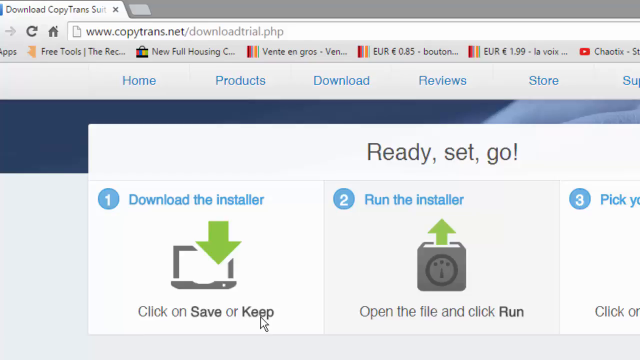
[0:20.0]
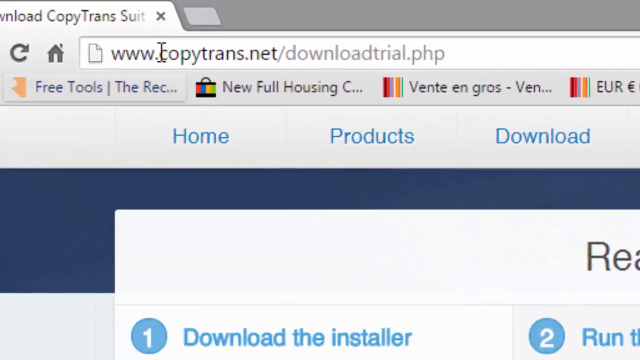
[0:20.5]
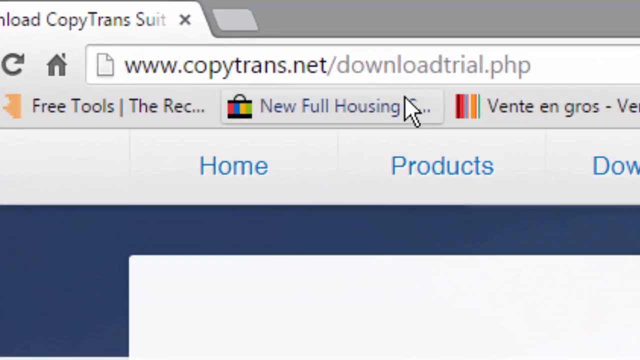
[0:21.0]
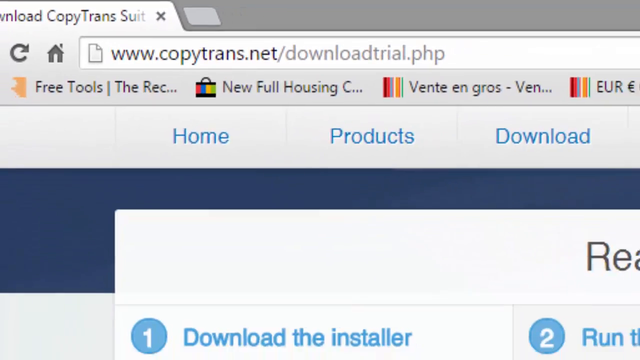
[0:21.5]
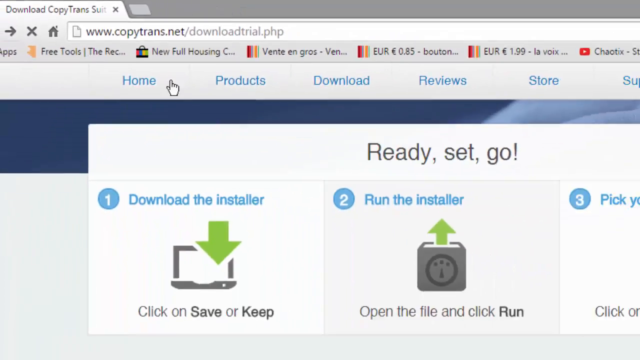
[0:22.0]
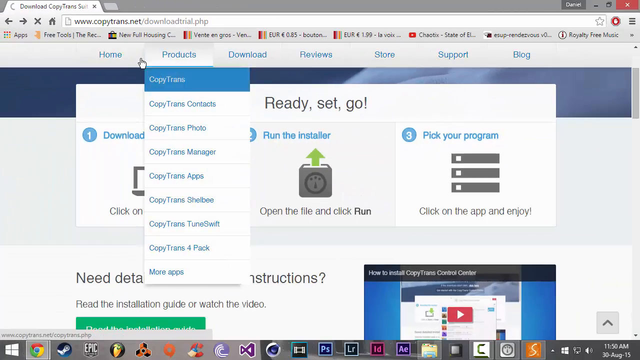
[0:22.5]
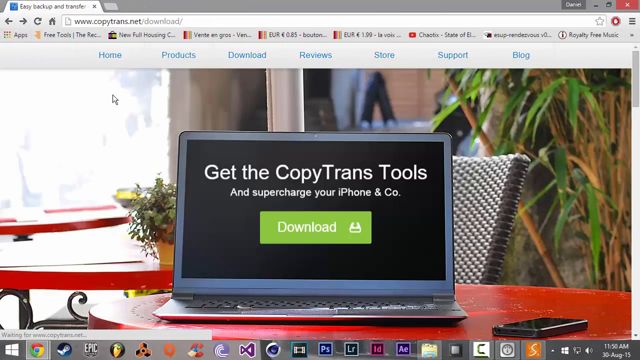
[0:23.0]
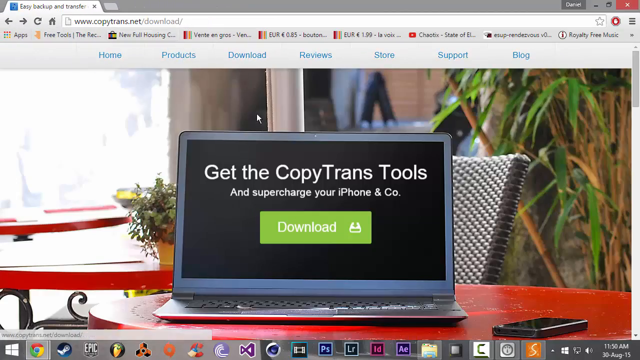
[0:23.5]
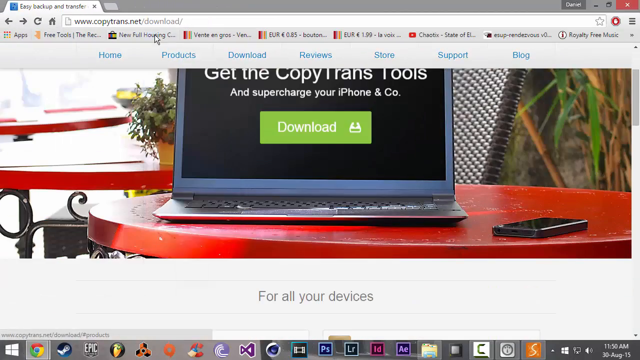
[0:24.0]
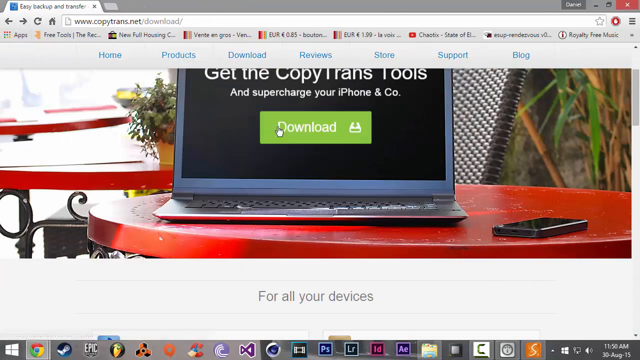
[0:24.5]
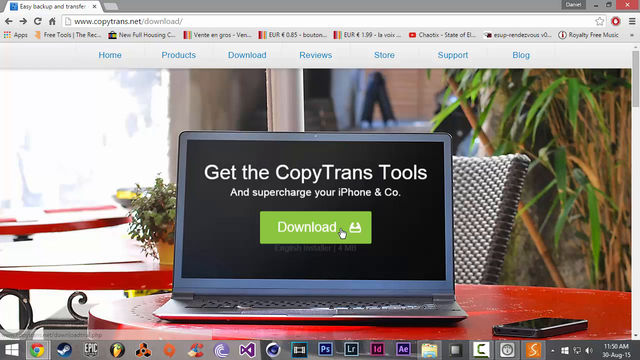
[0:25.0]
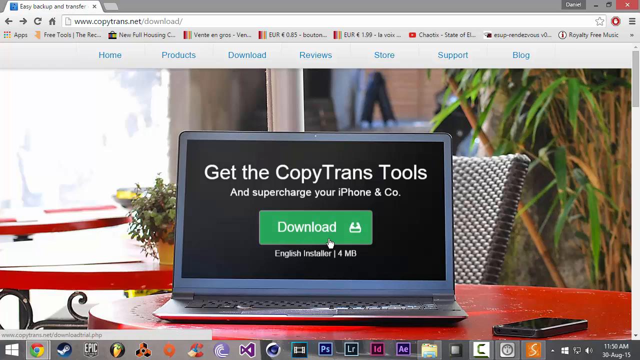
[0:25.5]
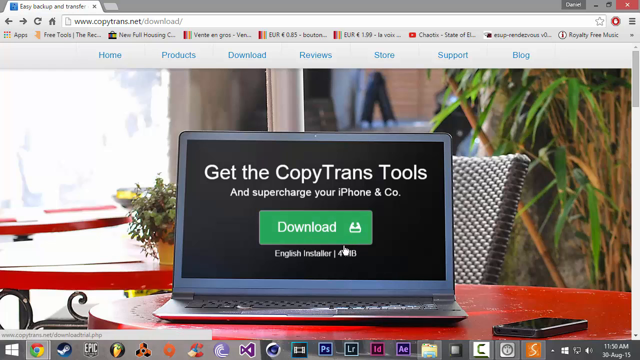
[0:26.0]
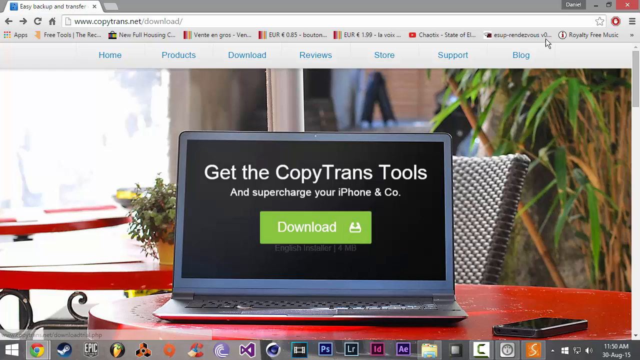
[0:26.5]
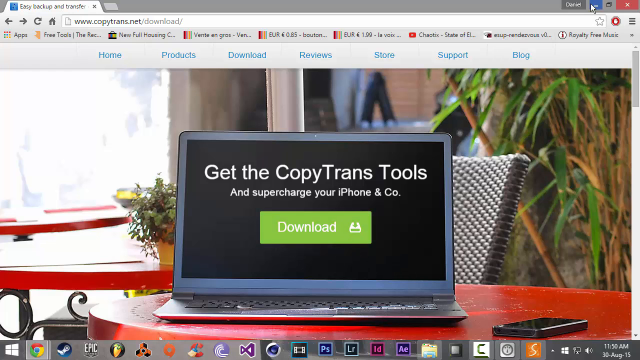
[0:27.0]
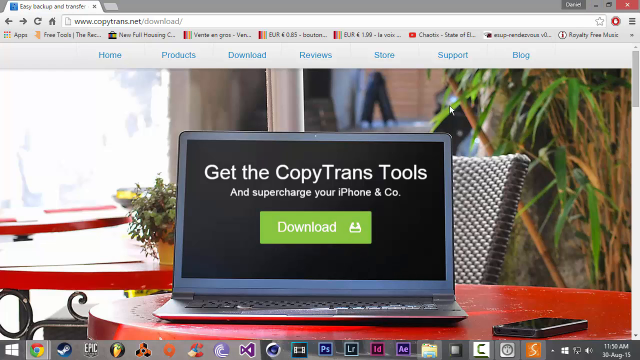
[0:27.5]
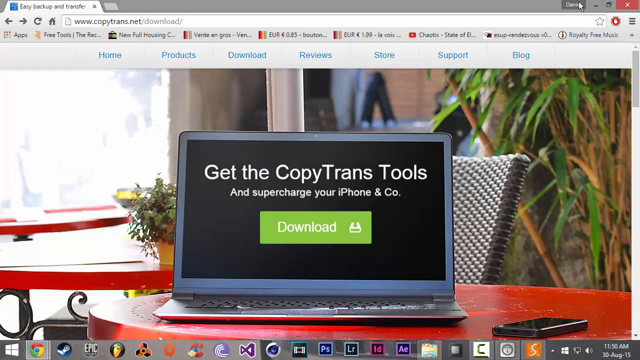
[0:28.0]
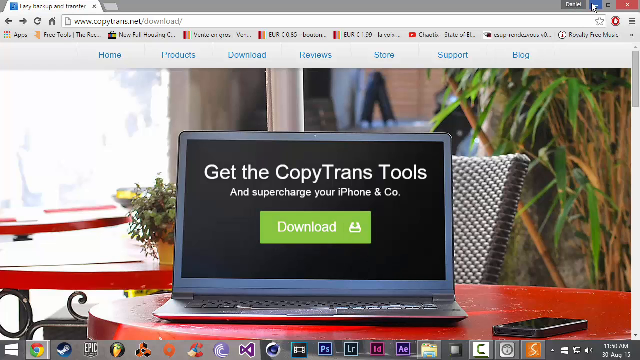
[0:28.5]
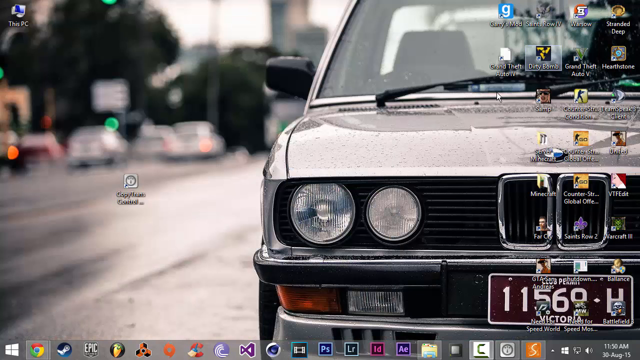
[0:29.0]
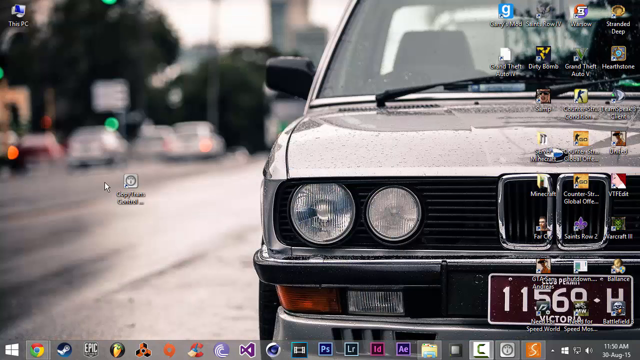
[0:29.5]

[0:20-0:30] A website is shown, and the camera seems to zoom in on the address bar, which says "copytrans.net". The webpage has a green button that says "download" inside a computer-generated image of a laptop. The cursor clicks a button at the top right of the screen, the window minimizes, and the user goes back to the home screen, where there is a kind of isolated icon to the left of the screen. They click on it and then go back into the website.